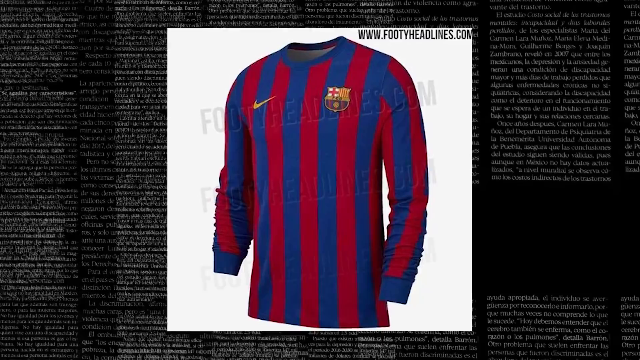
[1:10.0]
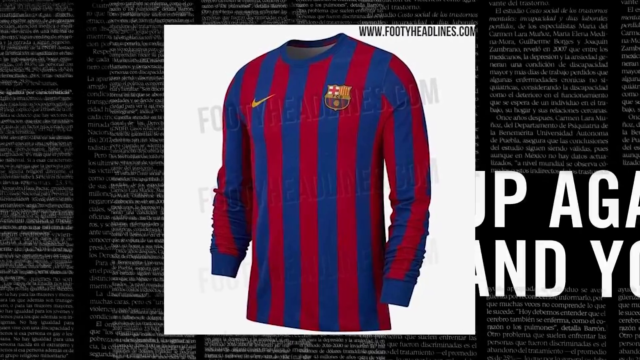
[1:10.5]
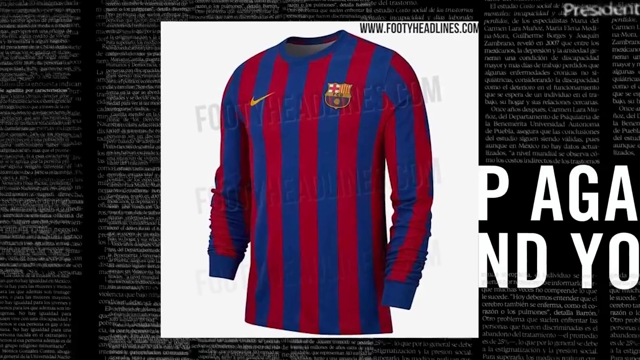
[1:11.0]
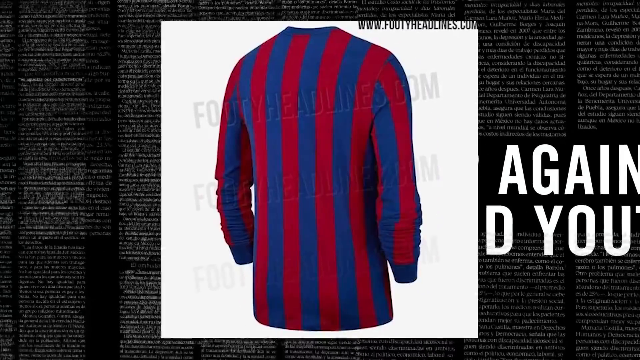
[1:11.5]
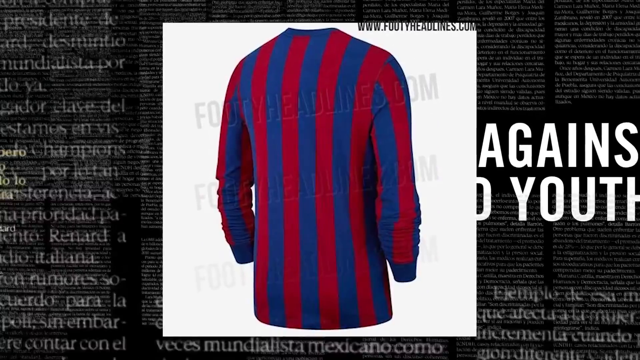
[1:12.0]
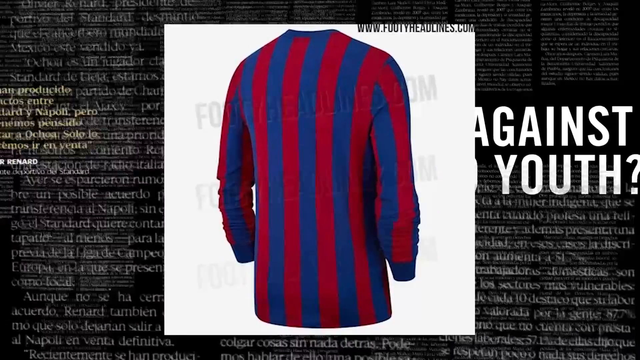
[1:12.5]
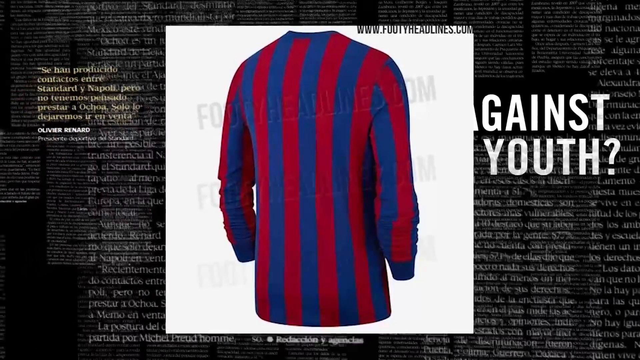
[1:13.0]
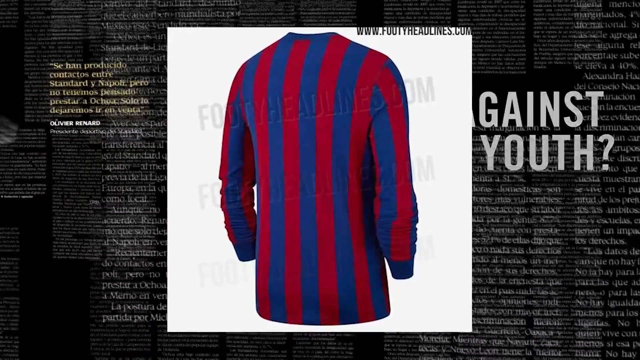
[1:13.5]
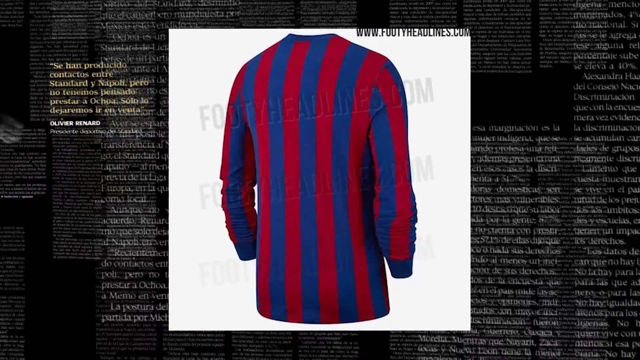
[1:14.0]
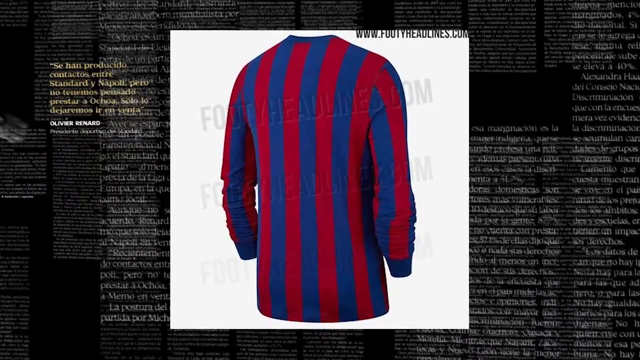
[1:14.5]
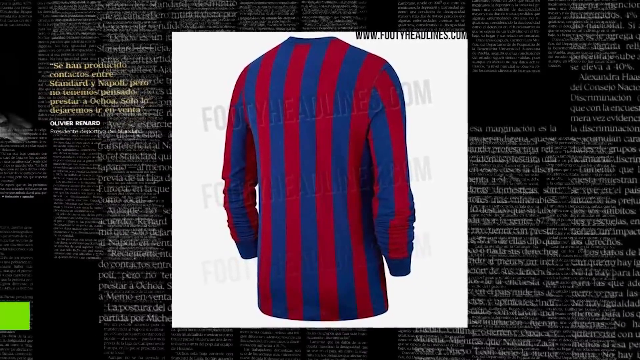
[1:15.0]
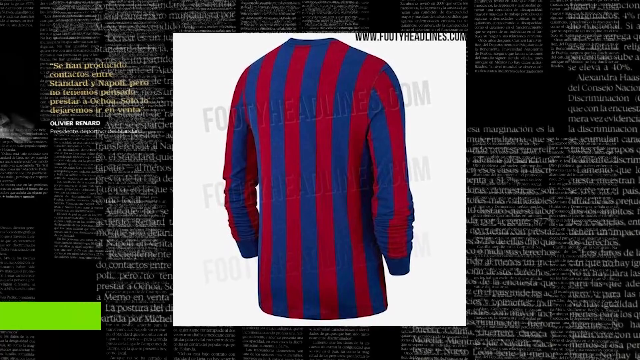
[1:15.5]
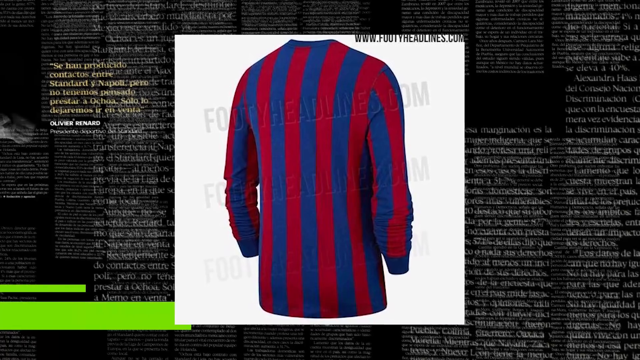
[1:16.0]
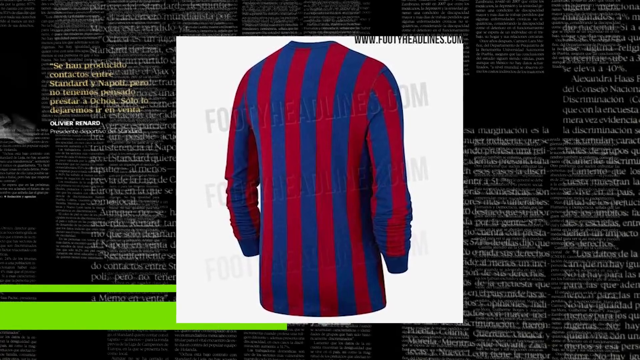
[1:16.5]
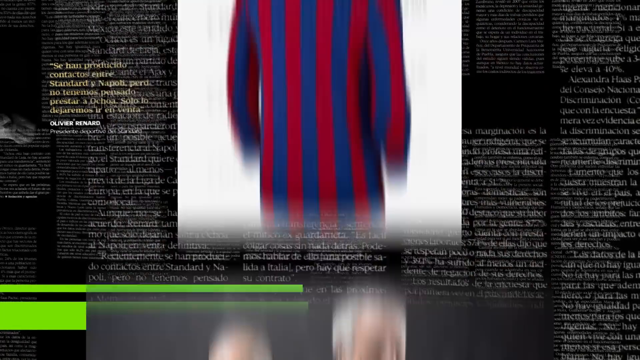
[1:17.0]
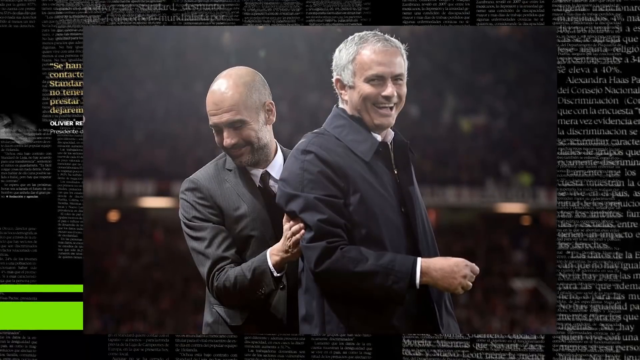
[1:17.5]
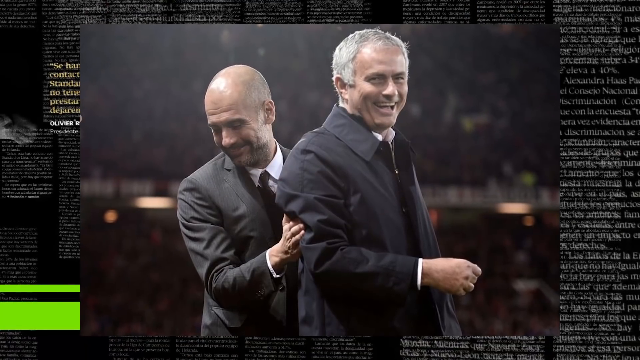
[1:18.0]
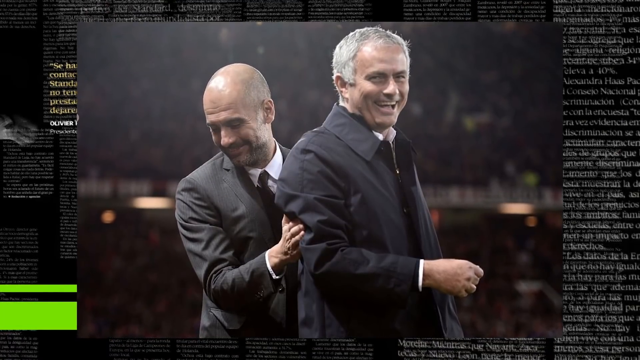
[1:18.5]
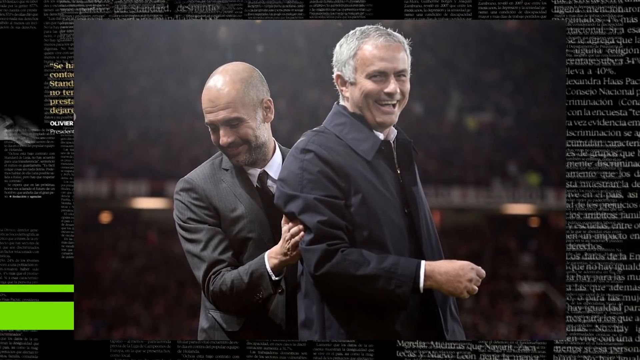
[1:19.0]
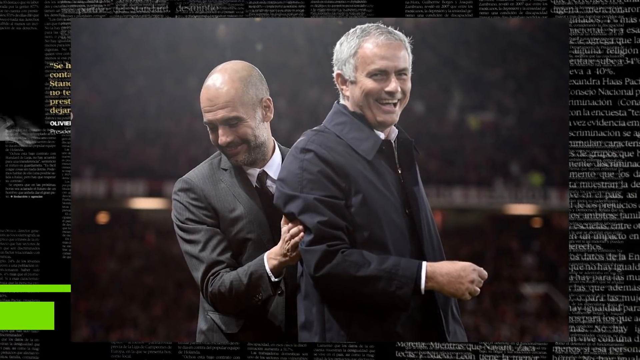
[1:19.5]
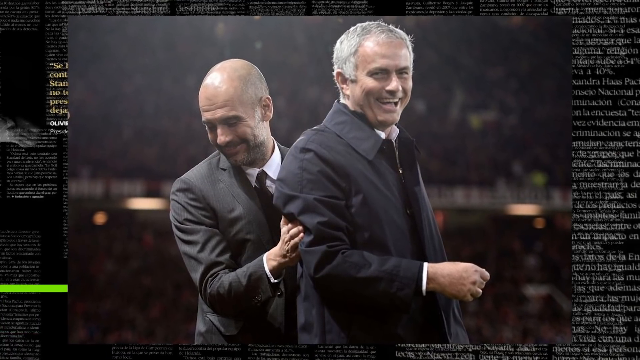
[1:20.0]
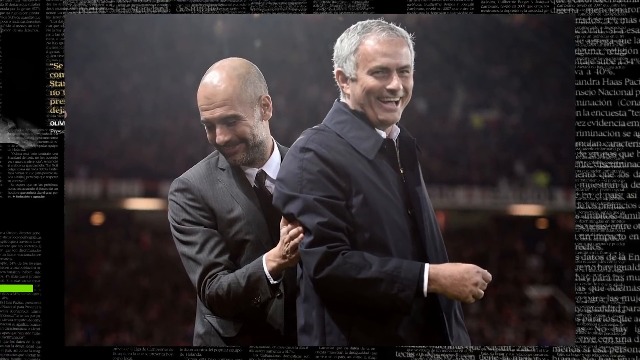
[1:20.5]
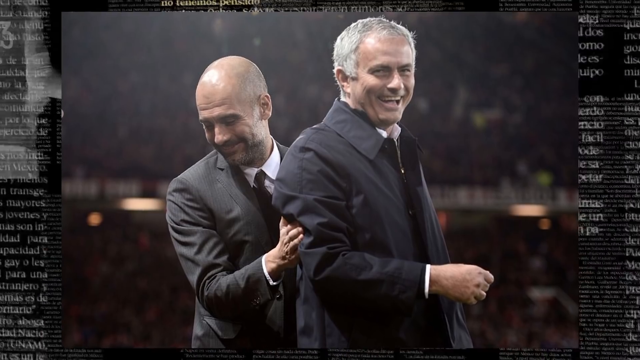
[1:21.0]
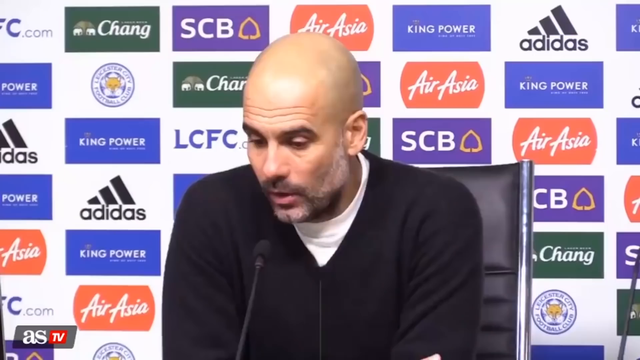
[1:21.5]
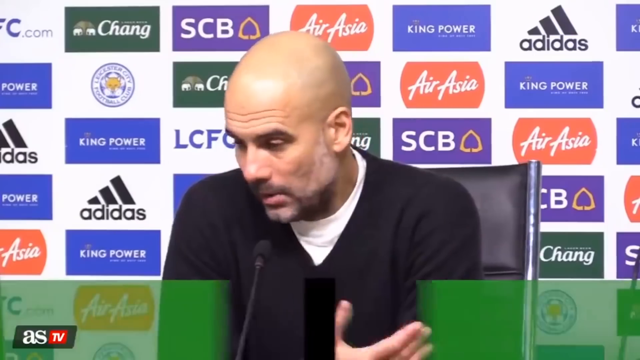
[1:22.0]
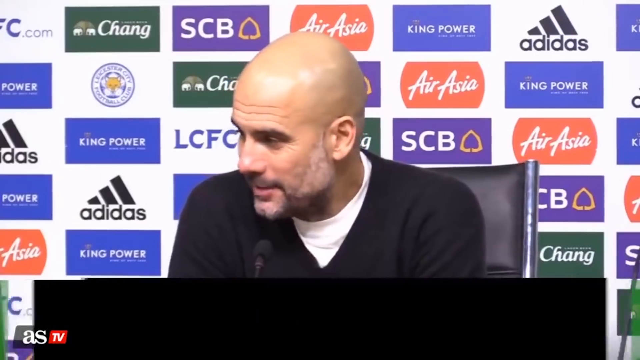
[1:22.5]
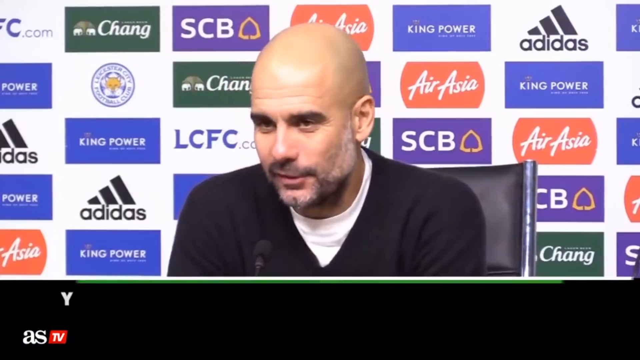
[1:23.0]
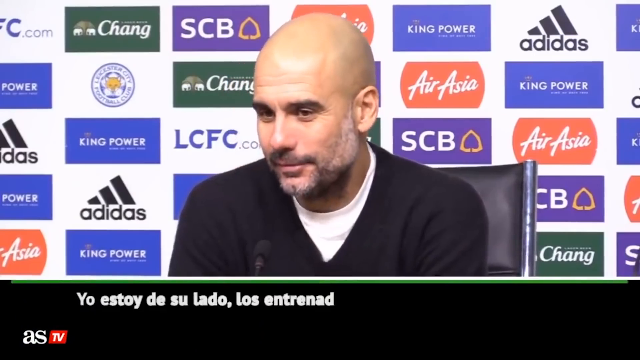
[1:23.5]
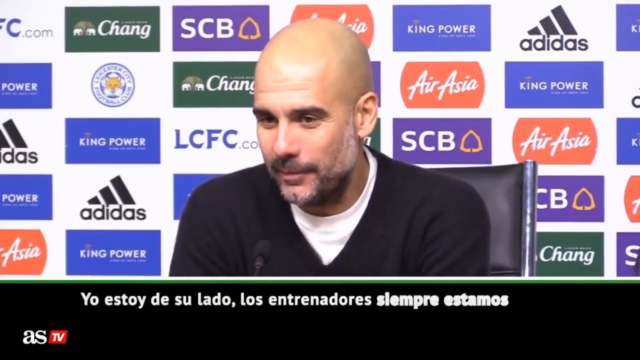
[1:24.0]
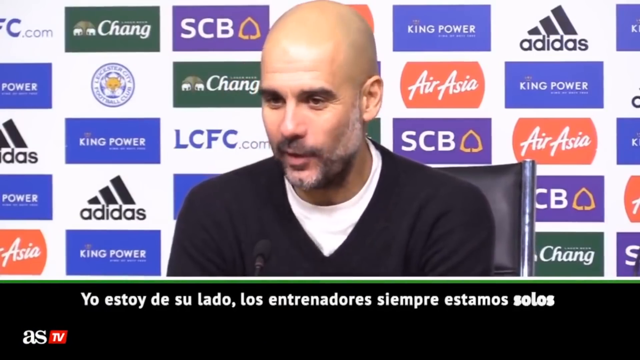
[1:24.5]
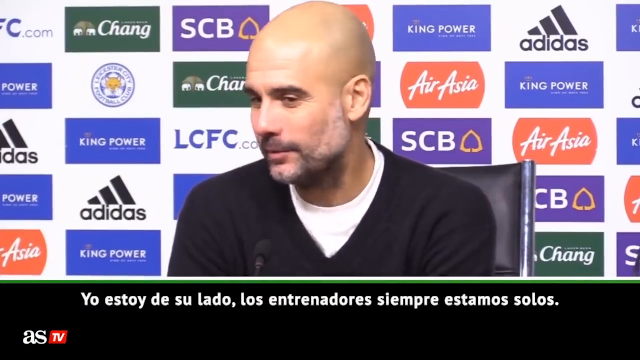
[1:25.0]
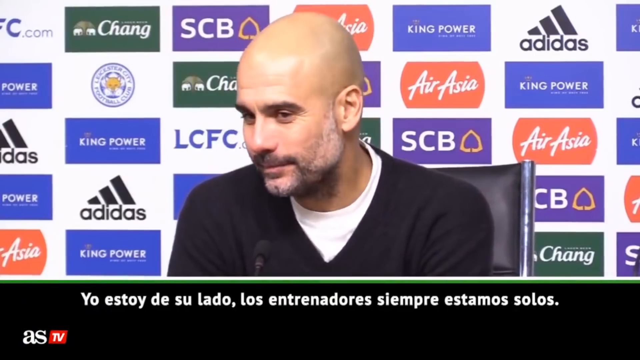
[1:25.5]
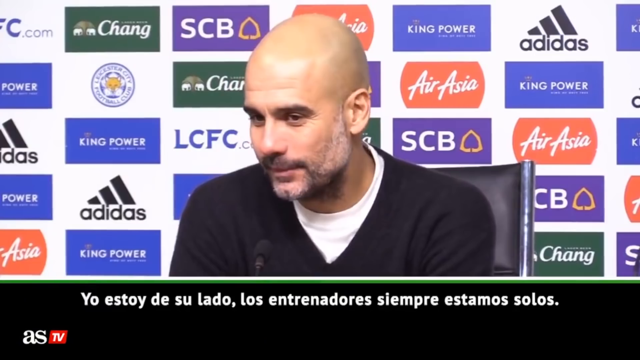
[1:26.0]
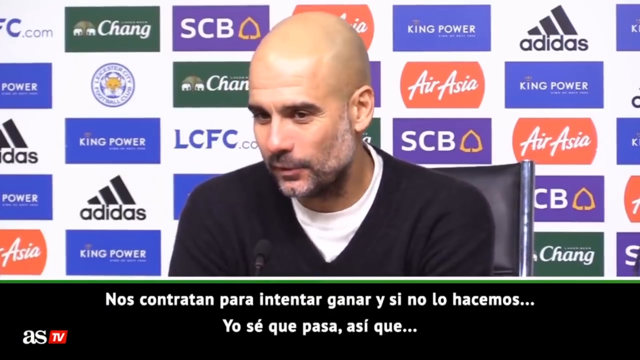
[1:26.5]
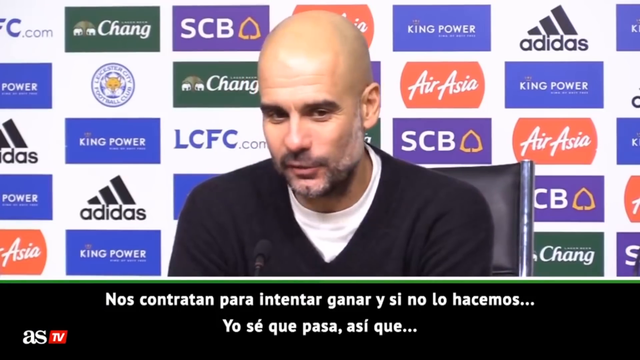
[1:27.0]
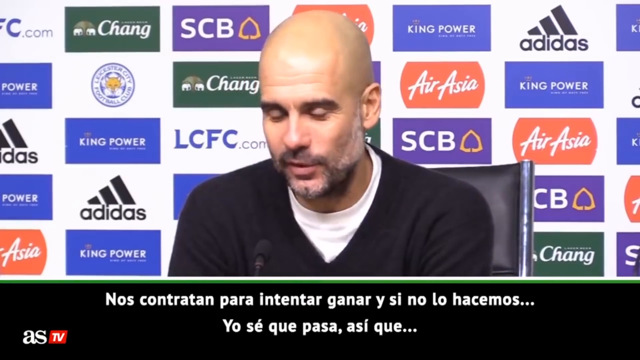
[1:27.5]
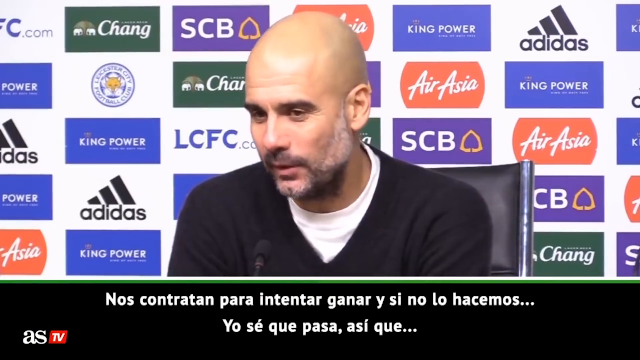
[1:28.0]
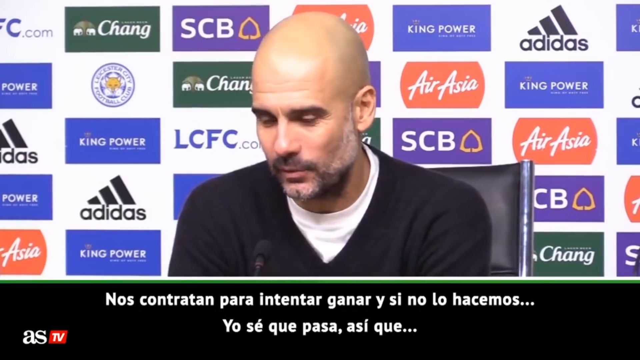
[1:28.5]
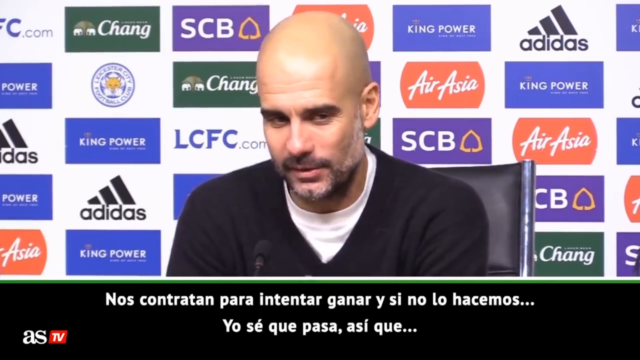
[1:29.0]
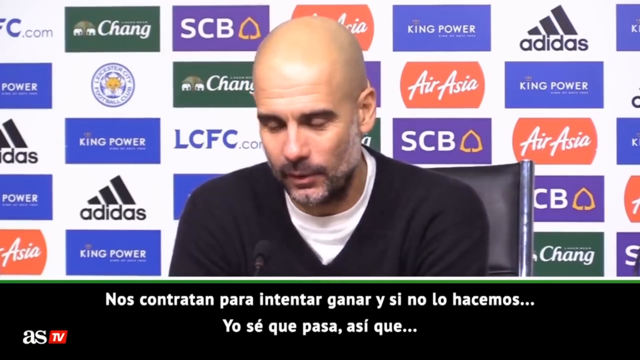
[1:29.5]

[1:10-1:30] The blue and red shirt is still shown. Then an image appears of two white men standing, both in gray suits, white shirts and darkish ties. The man on the viewer's left is bald; the man on the right is balding but has graying hair. Both seem to be smiling, and the man on the left has his right hand on the right shoulder of the man in front of him. Next is an image of the bald man, who seems to be sitting in front of a background containing many logos, including AirAsia, Adidas and SCB. He seems to be giving something like a press interview, and captions below him read something in Spanish.